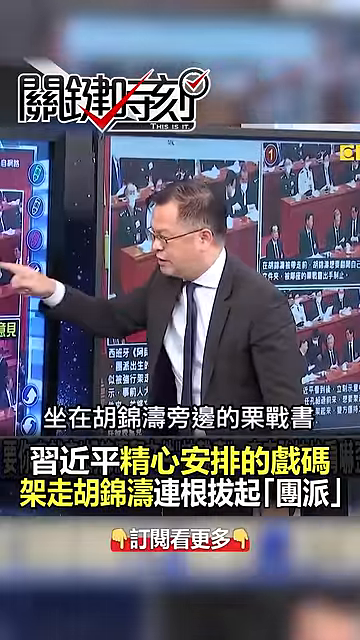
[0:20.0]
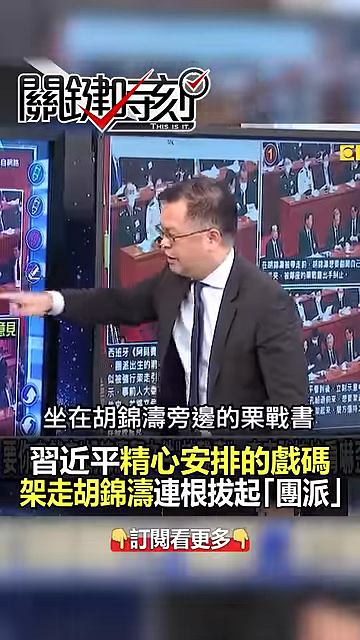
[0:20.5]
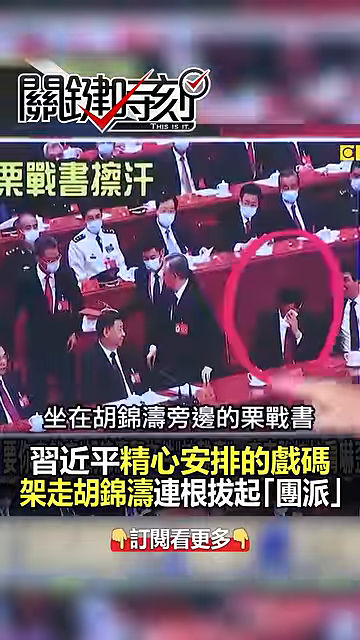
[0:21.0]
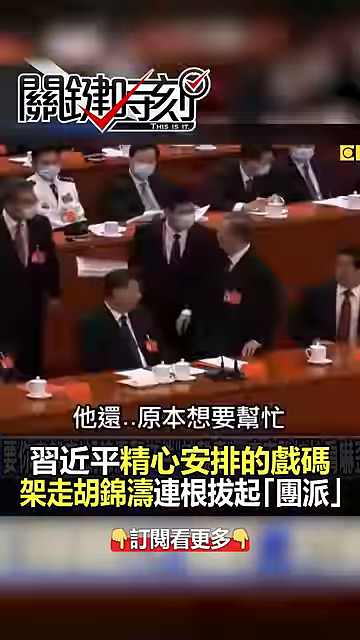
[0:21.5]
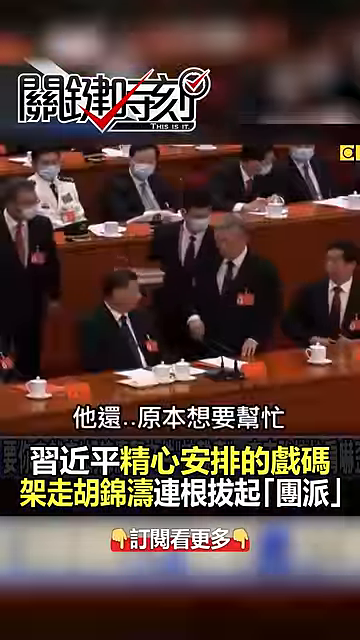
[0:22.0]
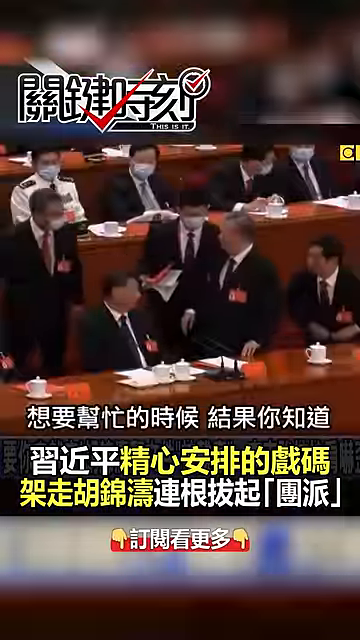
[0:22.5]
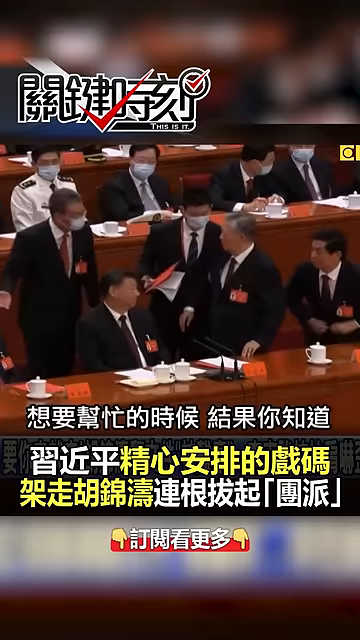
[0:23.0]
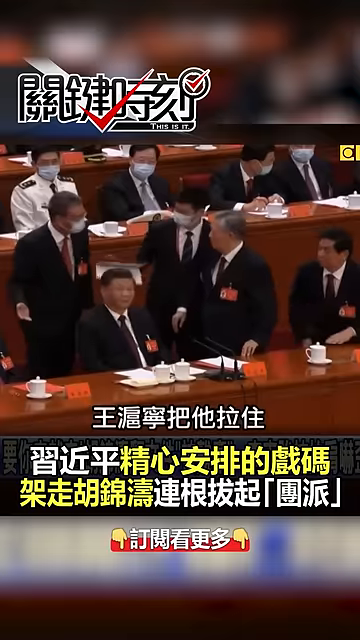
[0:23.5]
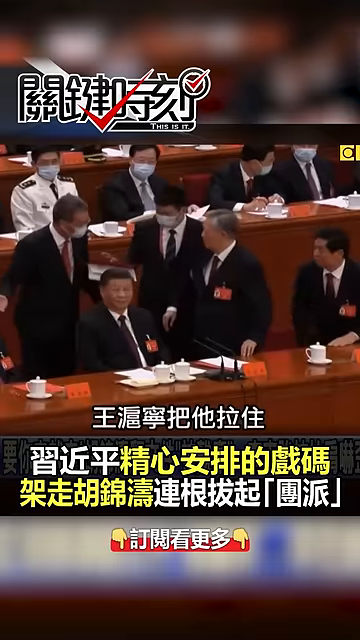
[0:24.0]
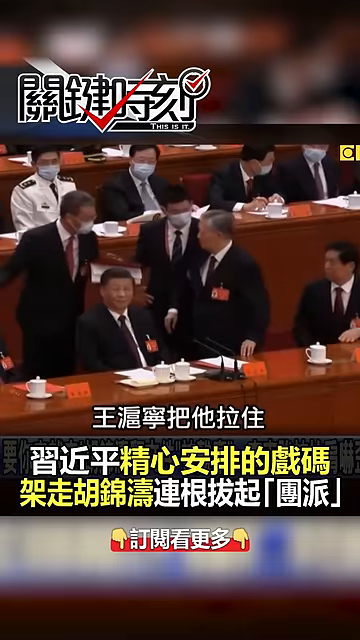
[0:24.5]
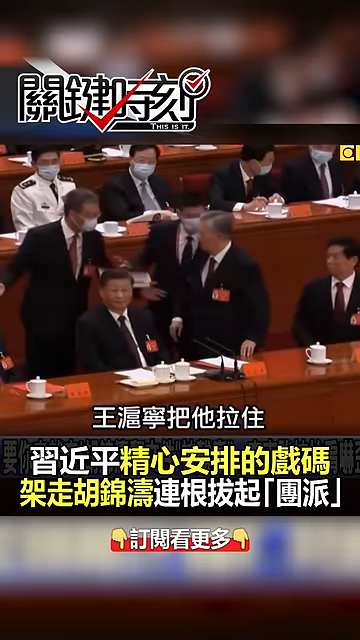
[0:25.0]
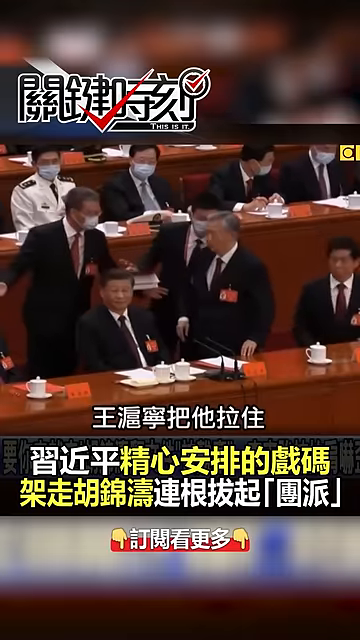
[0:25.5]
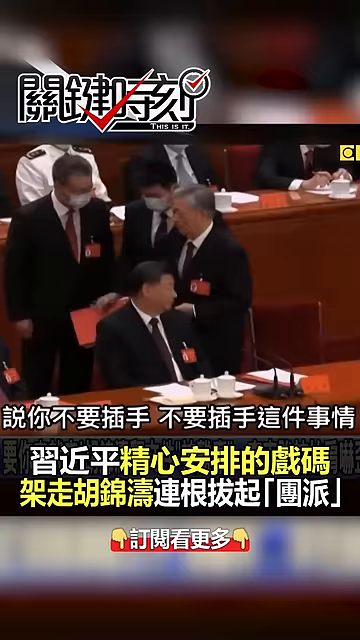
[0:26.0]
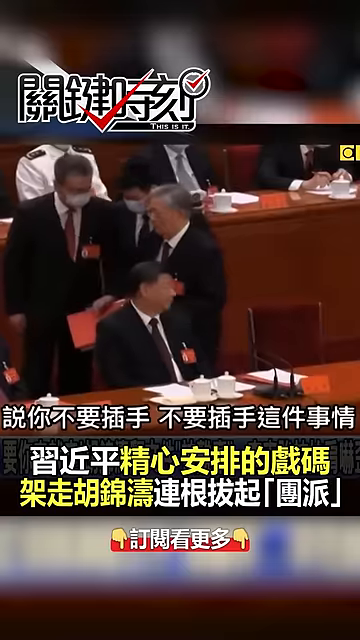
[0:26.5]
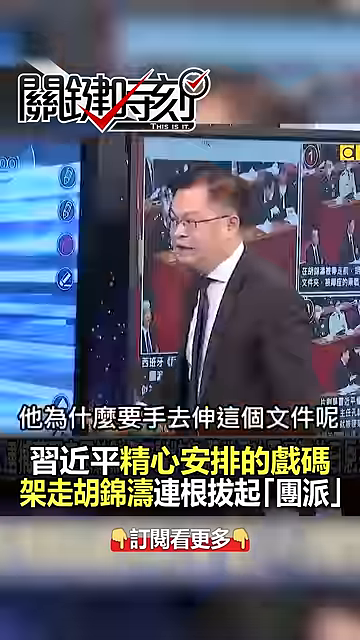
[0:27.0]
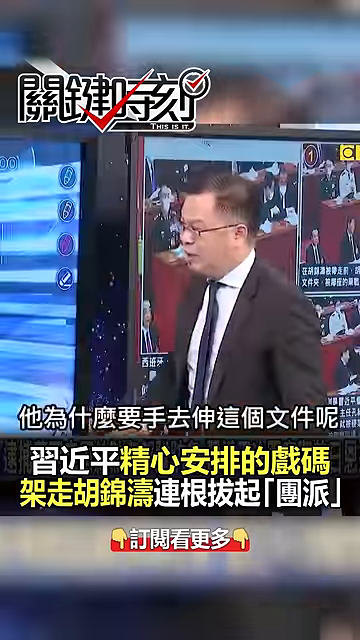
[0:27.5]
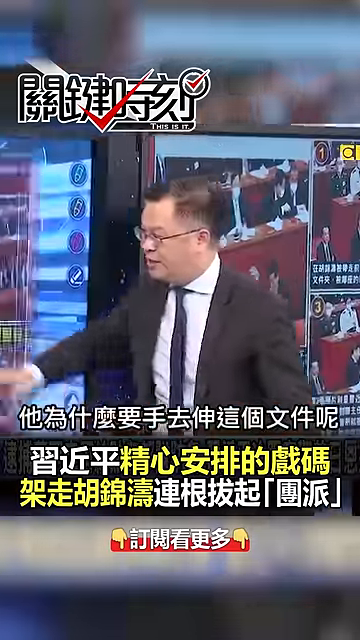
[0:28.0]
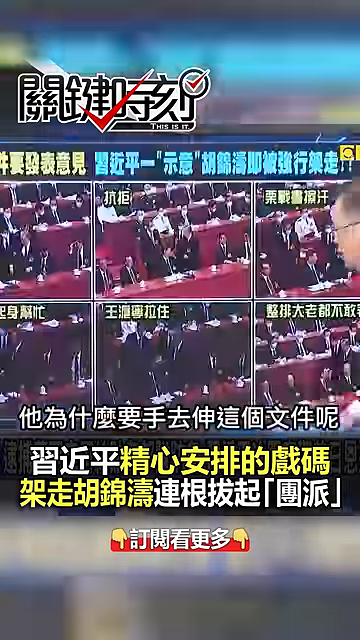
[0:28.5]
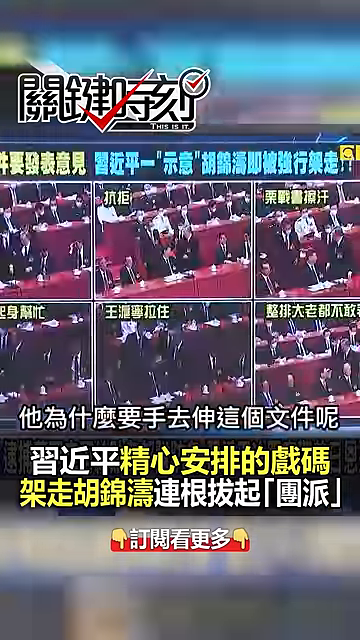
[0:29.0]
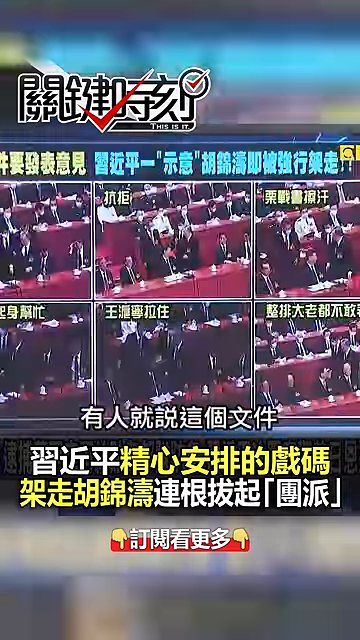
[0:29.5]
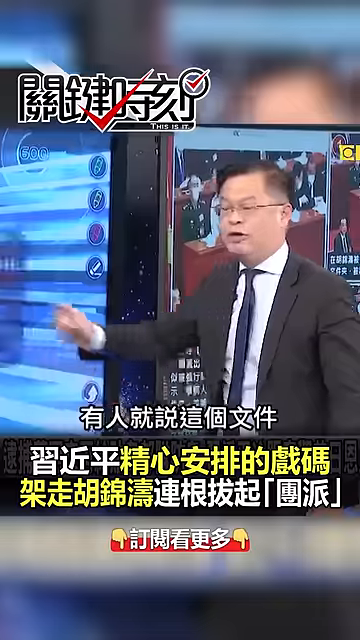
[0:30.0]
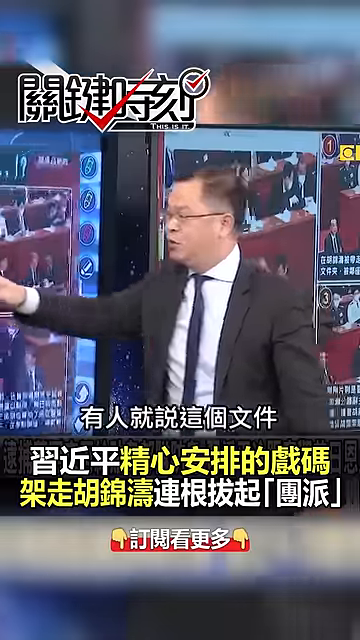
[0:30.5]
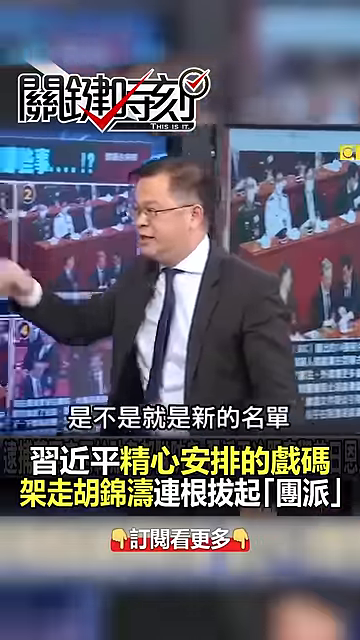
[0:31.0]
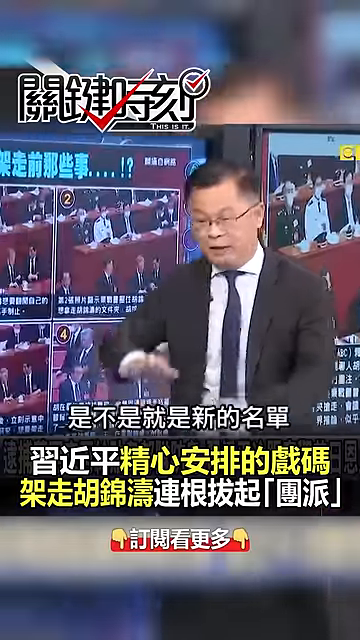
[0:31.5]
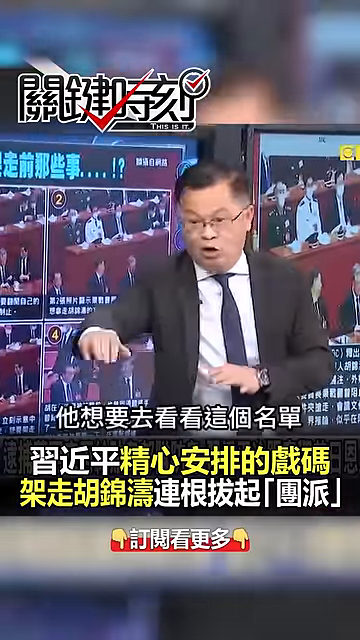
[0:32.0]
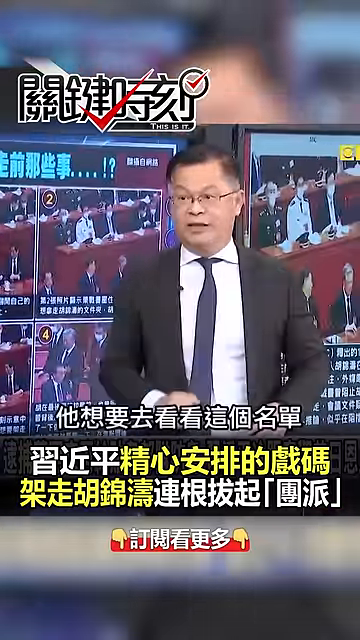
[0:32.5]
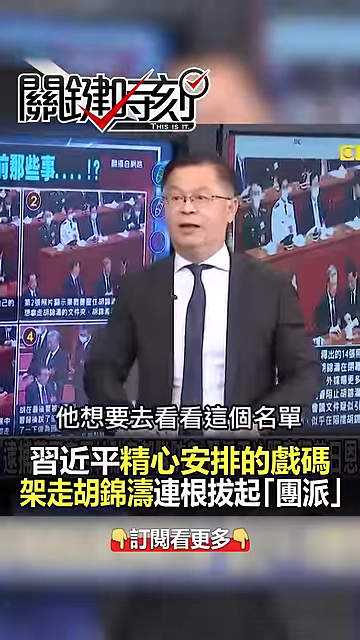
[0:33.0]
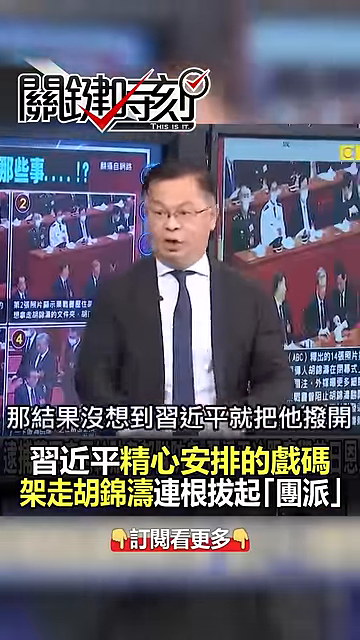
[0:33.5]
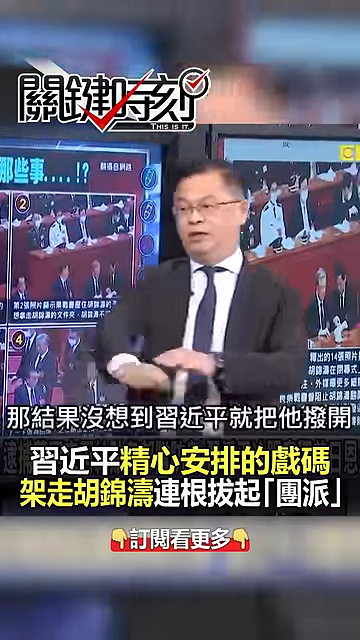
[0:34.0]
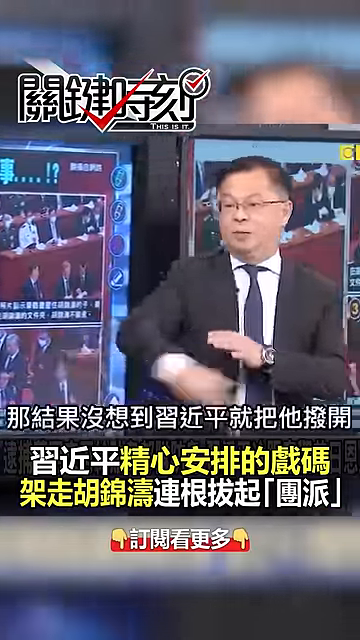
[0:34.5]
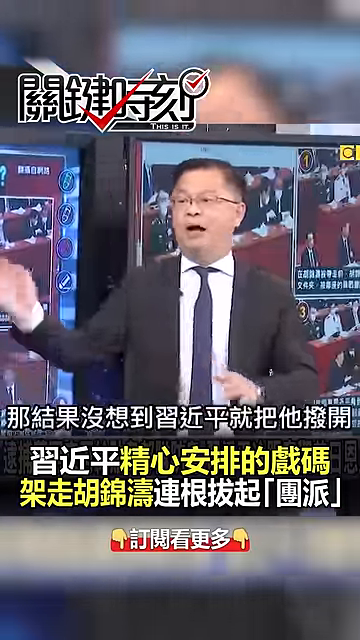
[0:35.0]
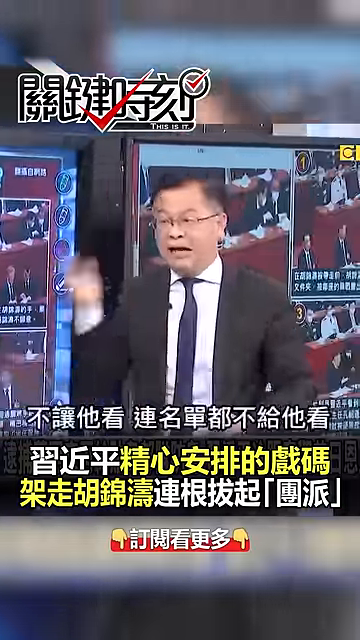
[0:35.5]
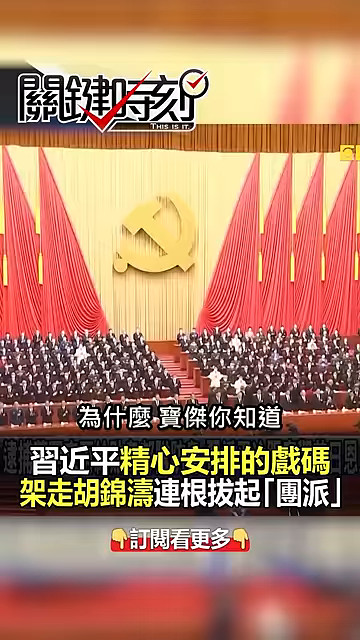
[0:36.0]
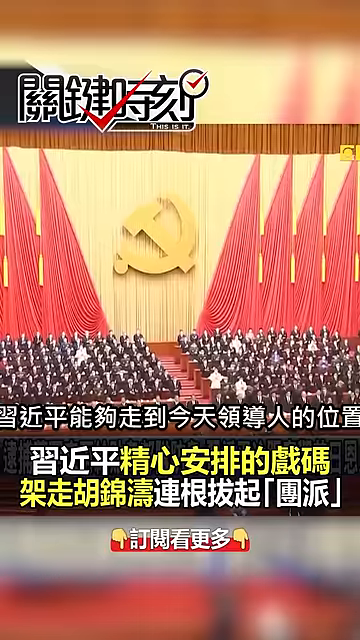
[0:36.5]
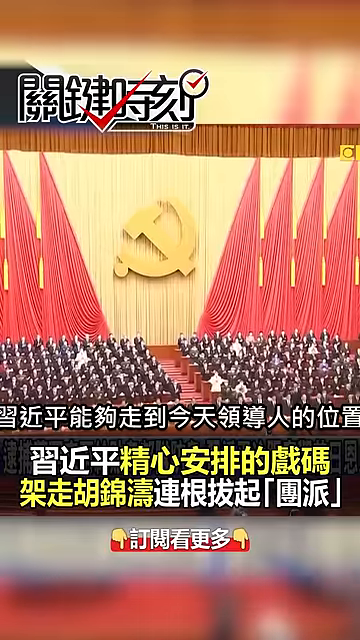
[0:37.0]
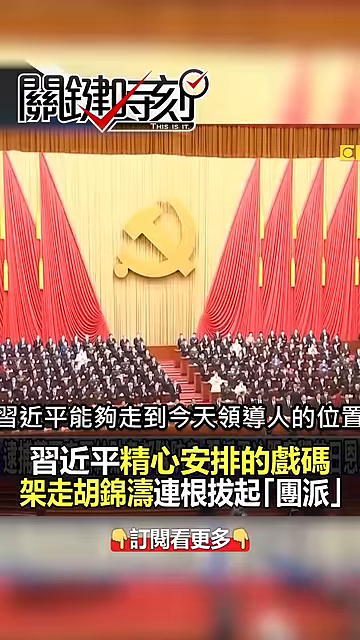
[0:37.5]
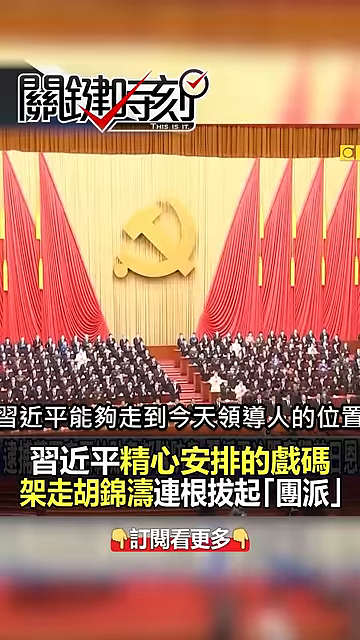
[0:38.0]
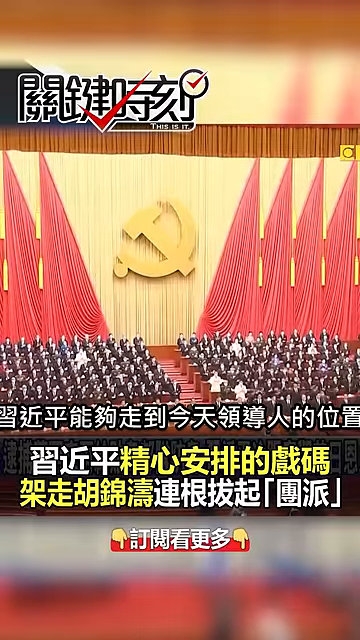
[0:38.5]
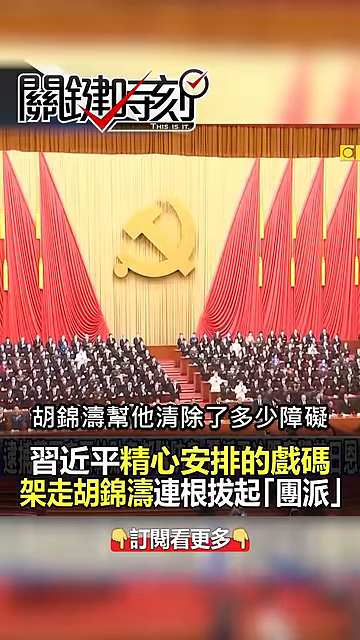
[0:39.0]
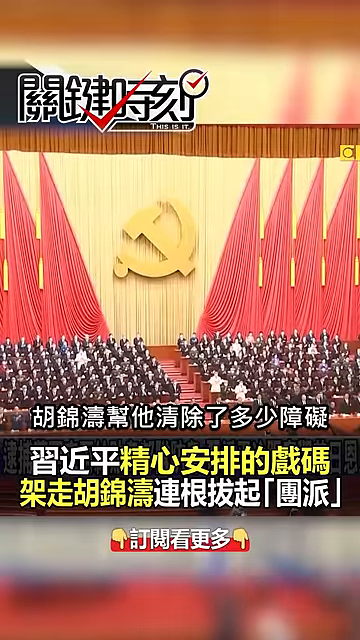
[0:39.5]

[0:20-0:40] The man points at a screen, apparently at pictures of people who are either present or absent at meetings. He has multiple photos and is yelling. A Chinese communist symbol appears in a meeting, and the view keeps panning over to the meeting of five Asian men. The angry man flails his arms around. A picture shows the symbol from the Chinese flag against a big wall, as if in a conference room, and he points at seats in the meeting. The subtitles are in Chinese. The video keeps cutting back and forth between pictures of the high-ranking officials and pictures on a screen of people either at a desk or not at a desk. The man wears a black suit, a tie and glasses, and appears to be kind of yelling and ranting.